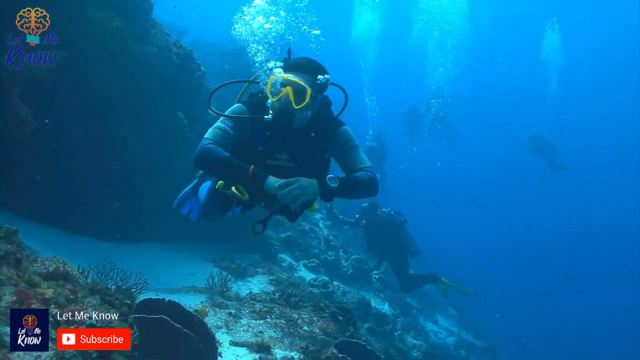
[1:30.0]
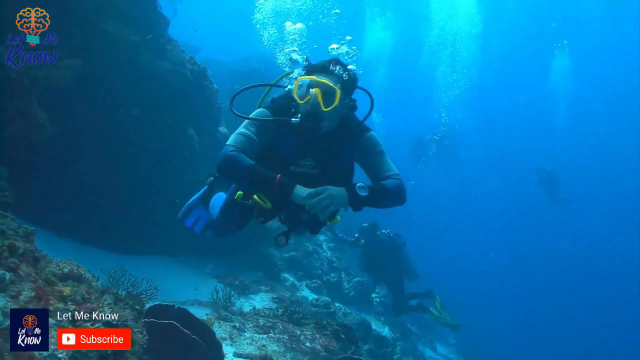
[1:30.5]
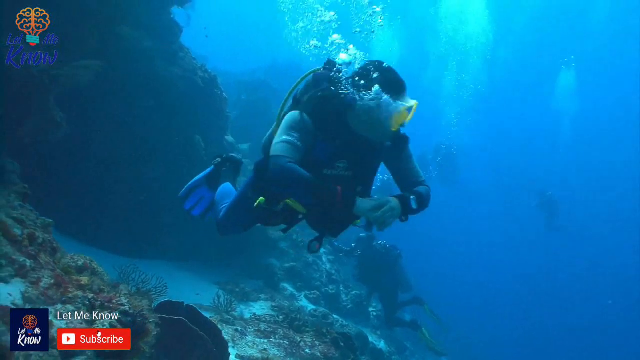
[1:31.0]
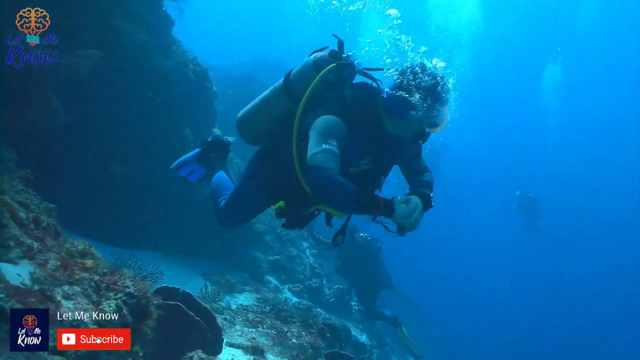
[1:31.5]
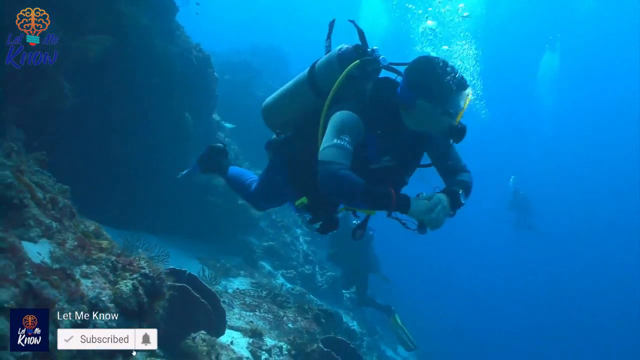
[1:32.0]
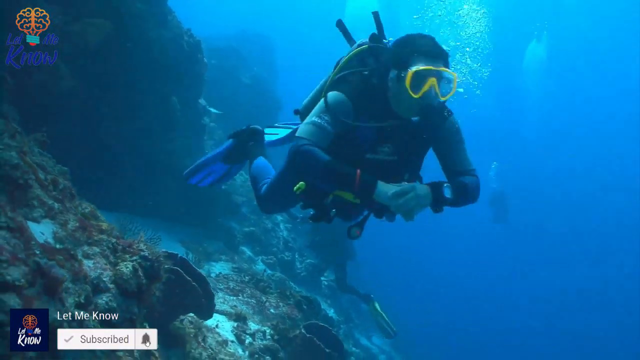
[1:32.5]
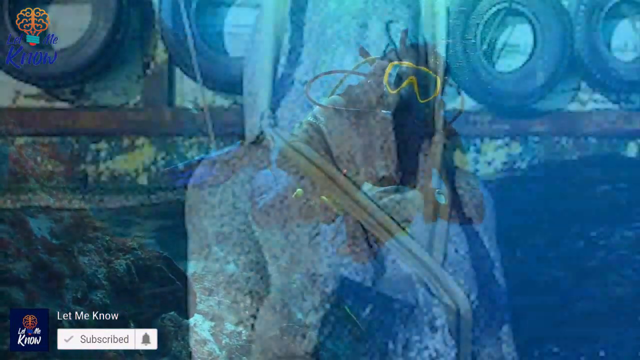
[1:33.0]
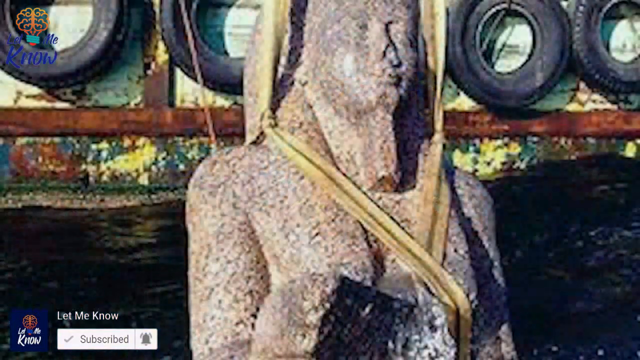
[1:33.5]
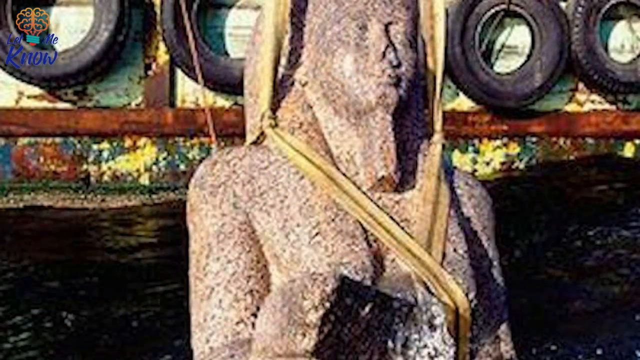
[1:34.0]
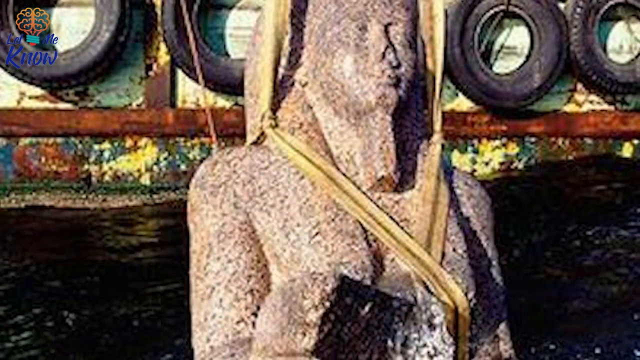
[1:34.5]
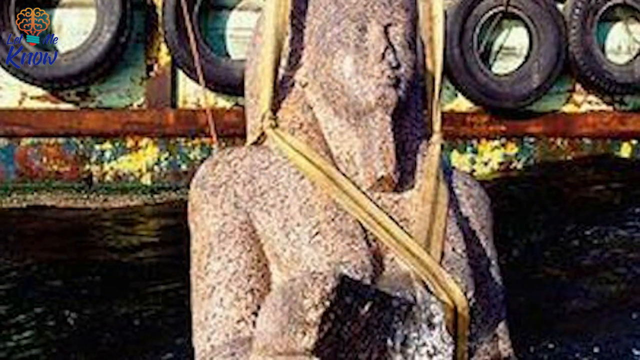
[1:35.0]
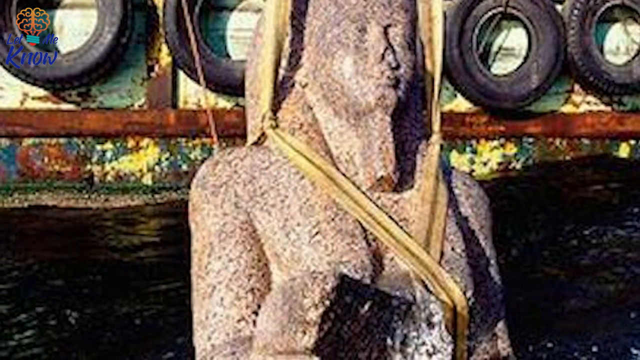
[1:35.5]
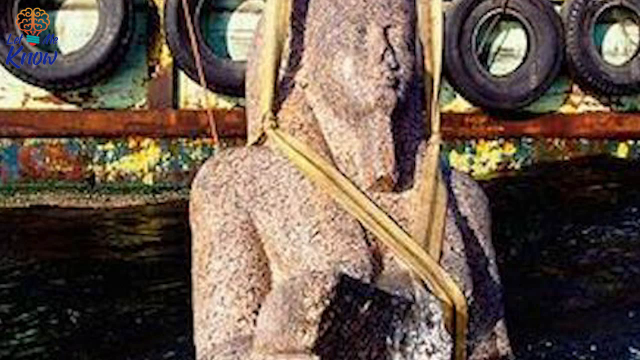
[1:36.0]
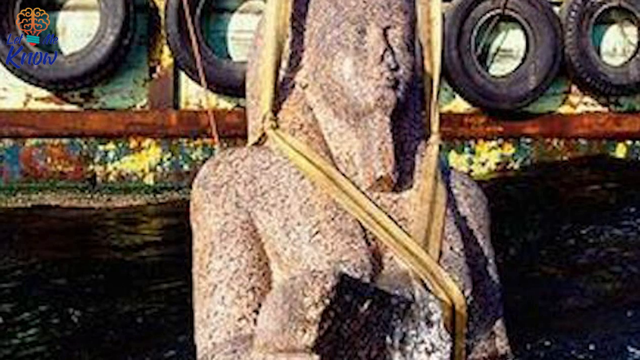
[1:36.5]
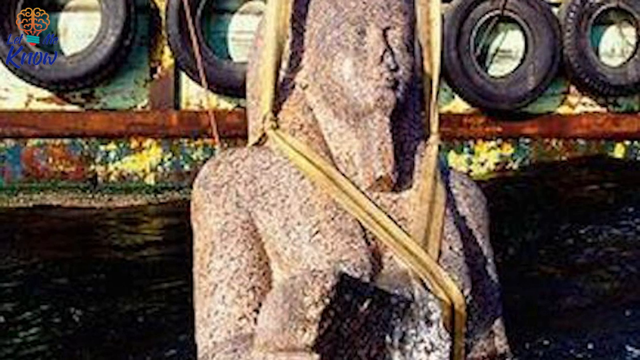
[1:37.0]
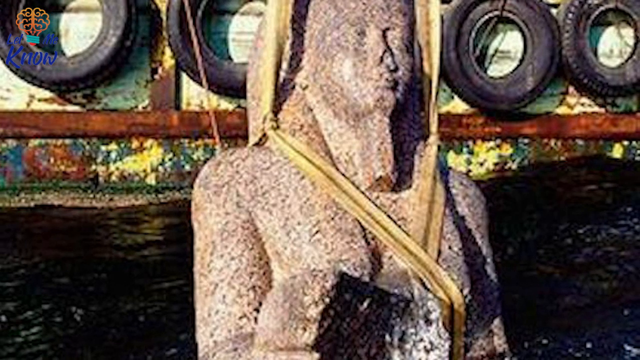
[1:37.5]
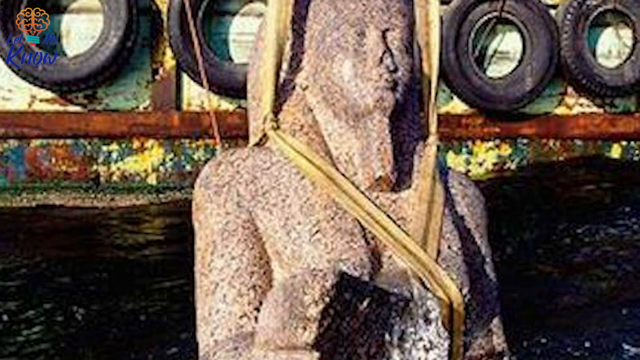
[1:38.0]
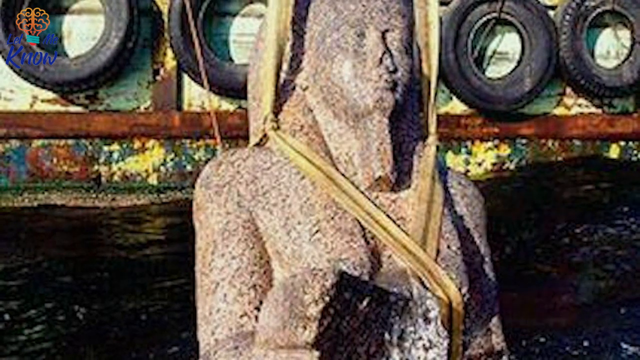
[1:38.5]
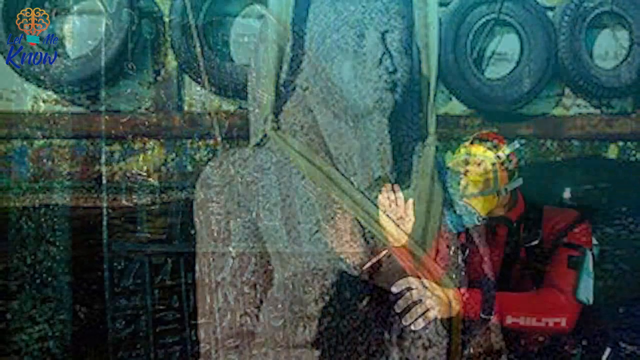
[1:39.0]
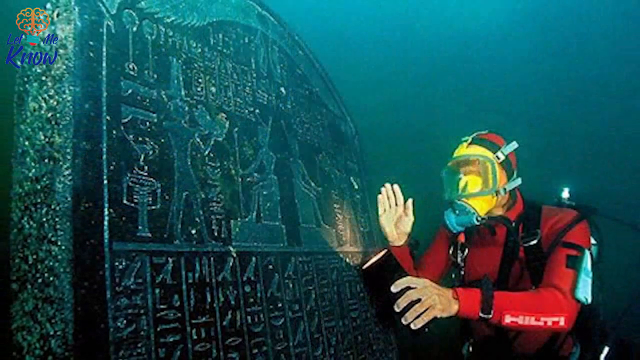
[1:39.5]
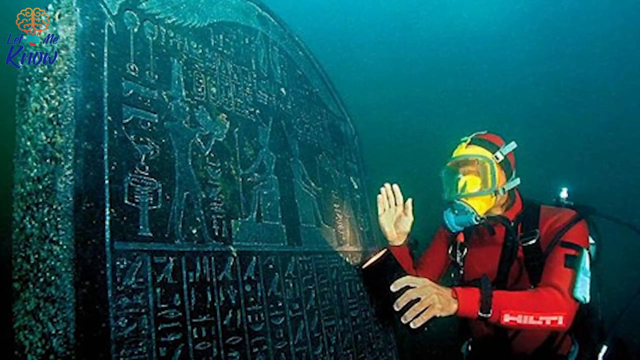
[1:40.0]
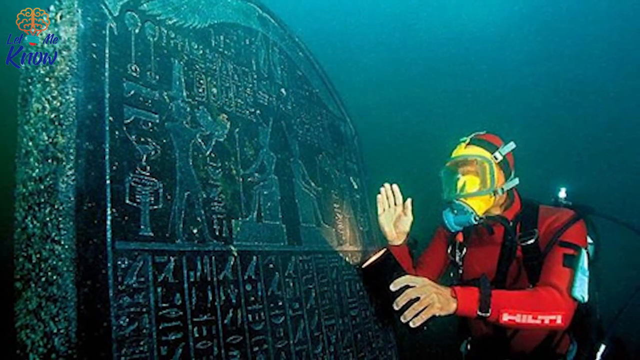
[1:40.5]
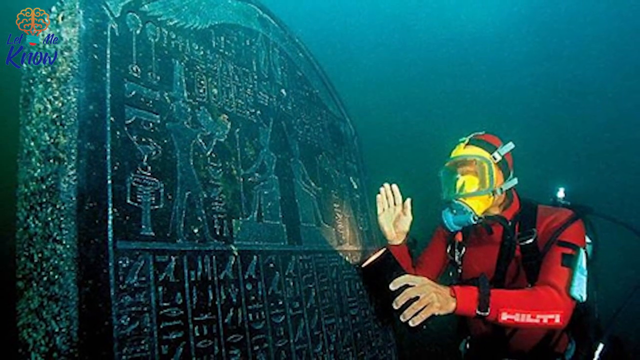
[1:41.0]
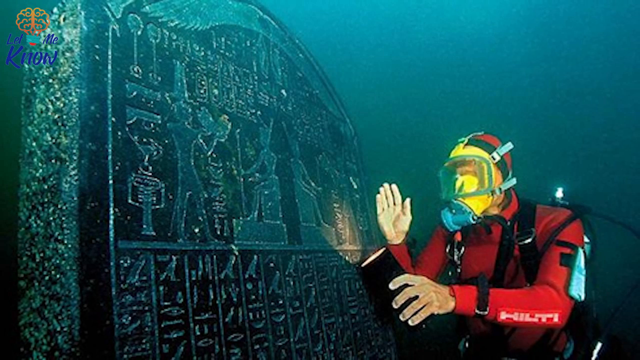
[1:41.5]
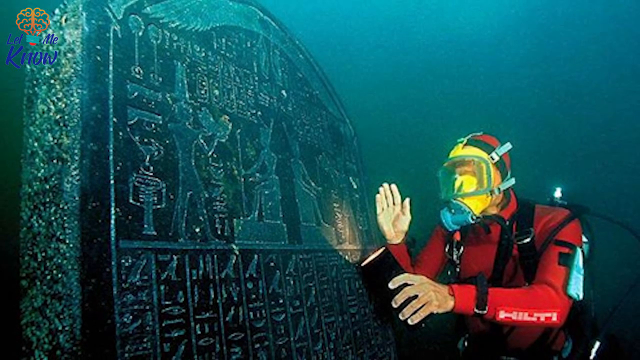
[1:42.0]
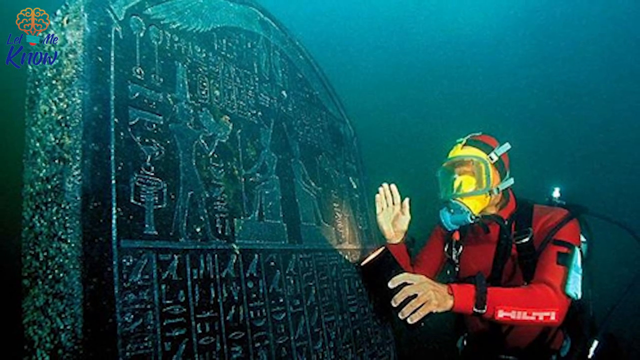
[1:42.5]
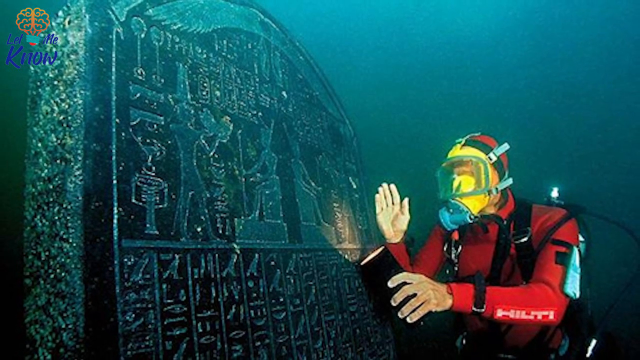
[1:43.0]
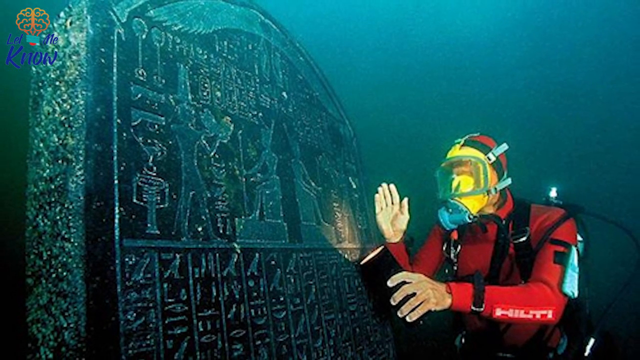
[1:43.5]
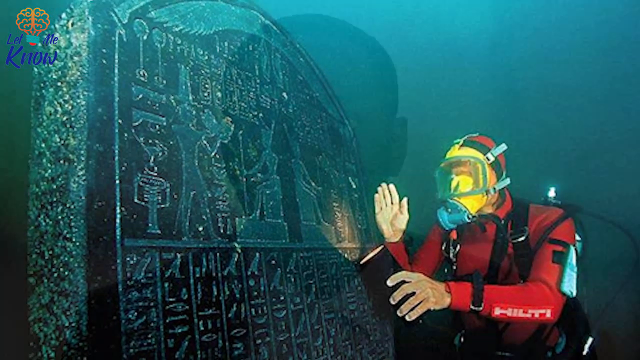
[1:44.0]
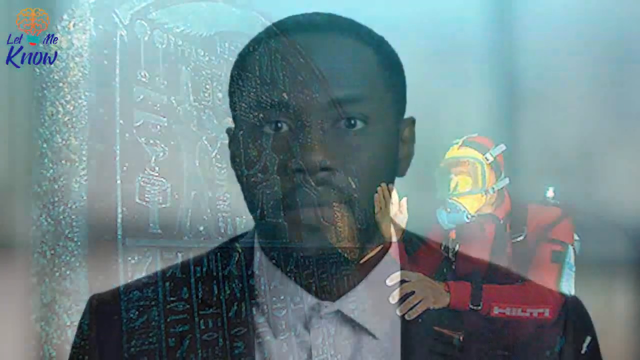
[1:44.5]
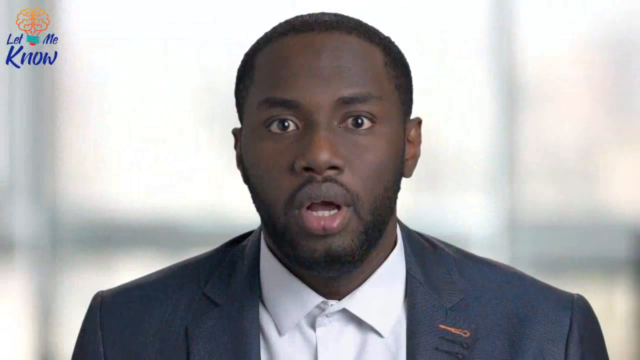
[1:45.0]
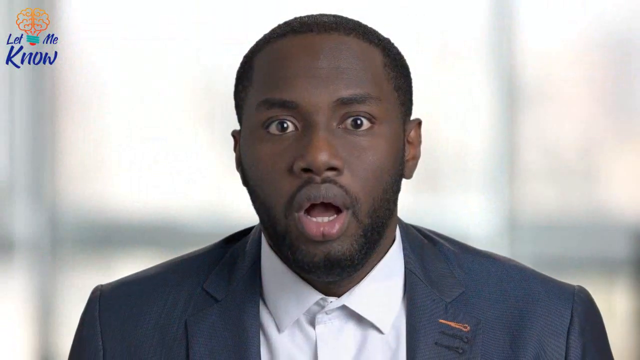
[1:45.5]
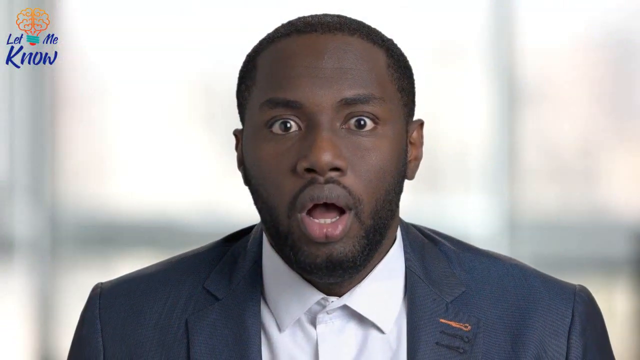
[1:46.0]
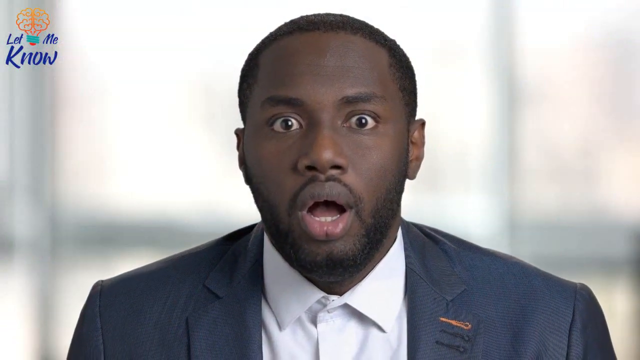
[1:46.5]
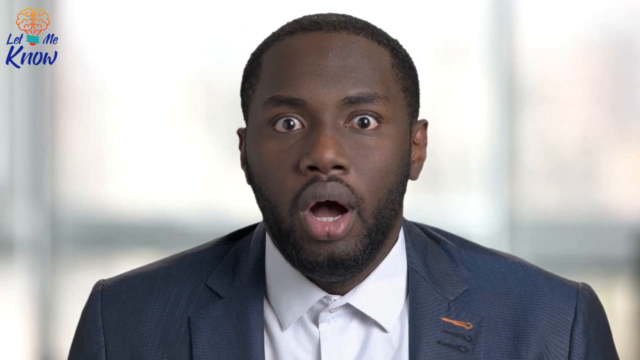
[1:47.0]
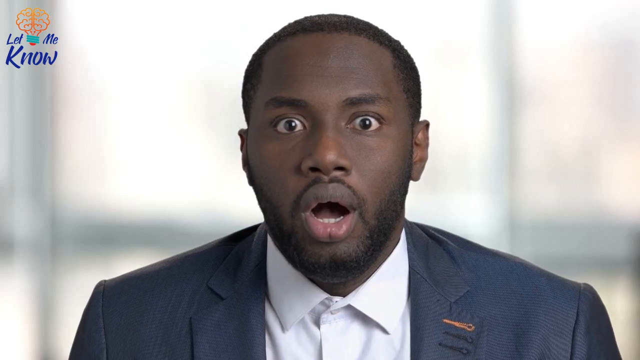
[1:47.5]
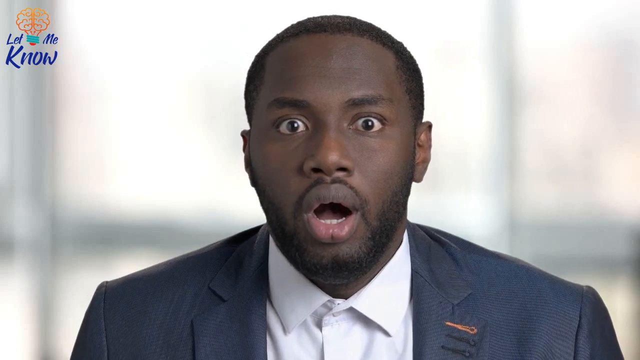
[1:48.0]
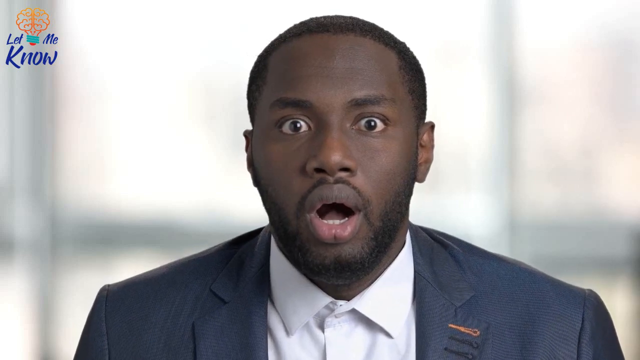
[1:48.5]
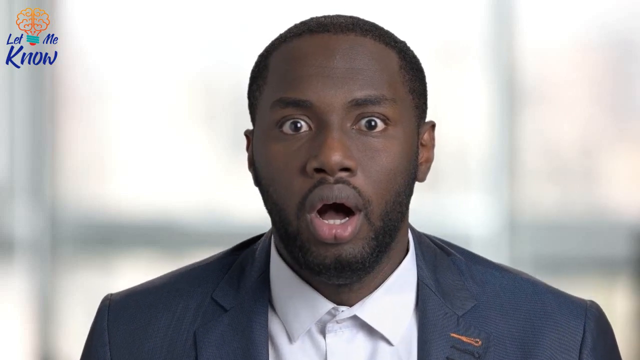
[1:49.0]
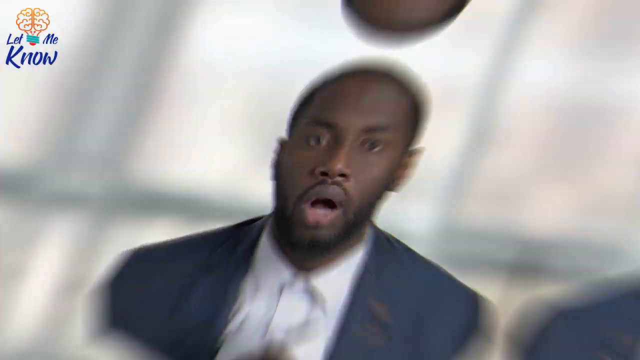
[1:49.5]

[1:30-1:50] A scuba diver looks back. The stone statue is then shown, apparently retrieved, next to a barge above the sea. Another scuba diver in red gear inspects a relic. Next, a dark-skinned man seems to take everything in. The scenes contrast a shallower, brighter teal underwater setting with a darker, murky grey depth where the divers in red work.